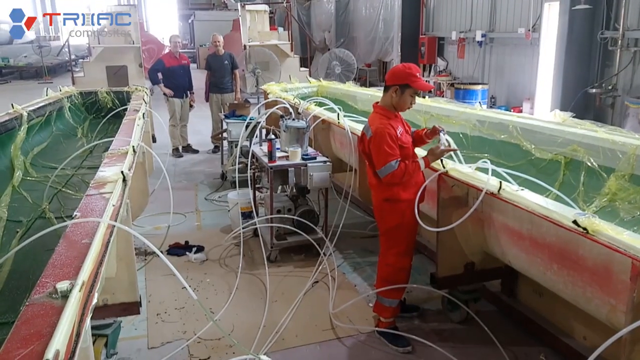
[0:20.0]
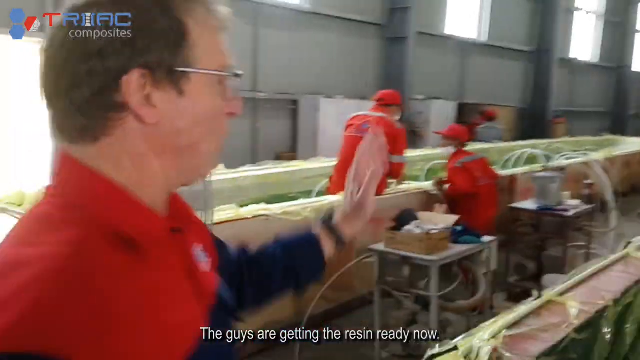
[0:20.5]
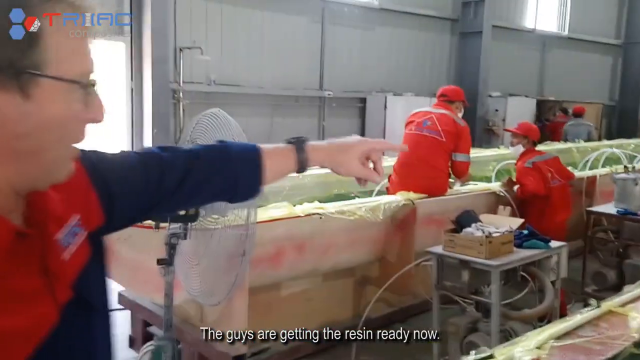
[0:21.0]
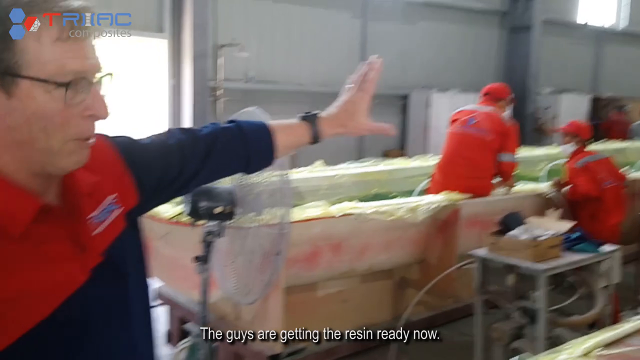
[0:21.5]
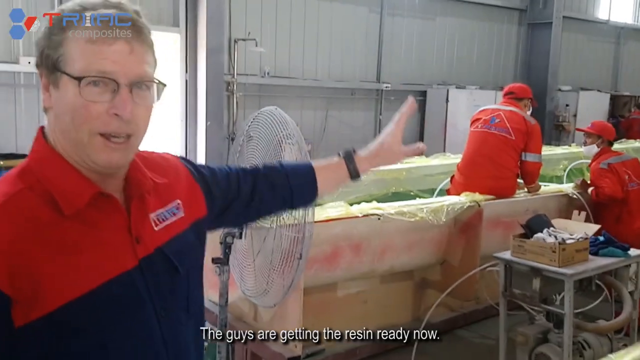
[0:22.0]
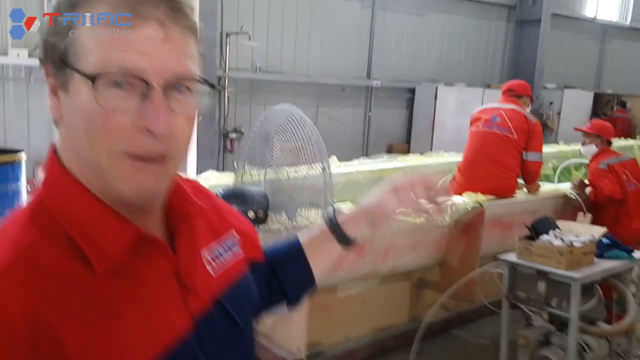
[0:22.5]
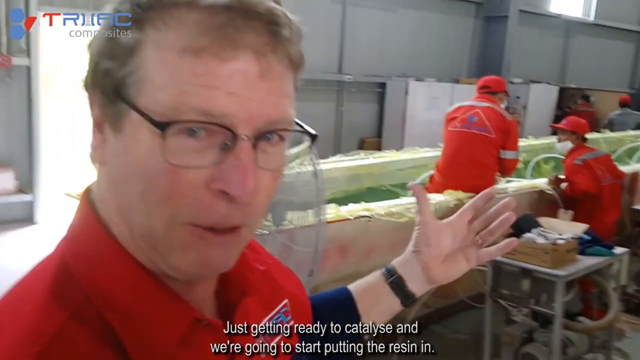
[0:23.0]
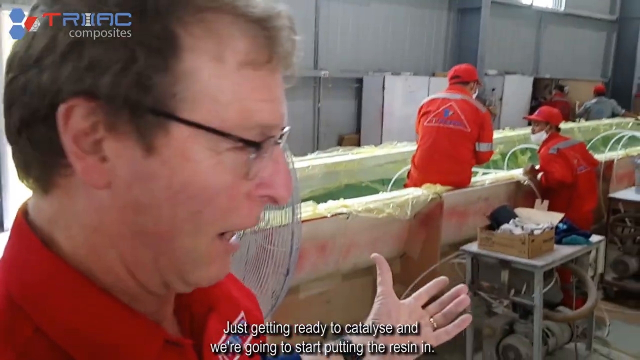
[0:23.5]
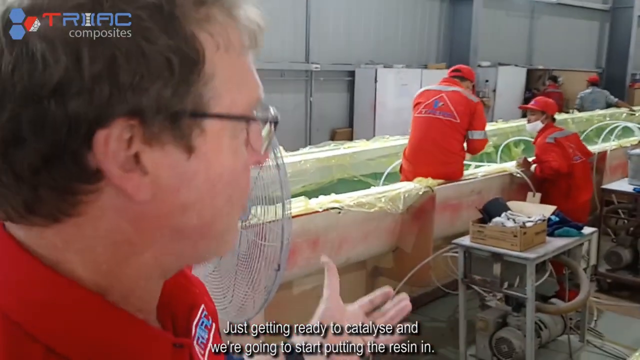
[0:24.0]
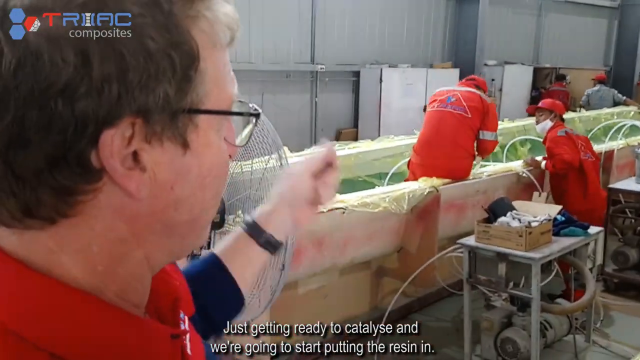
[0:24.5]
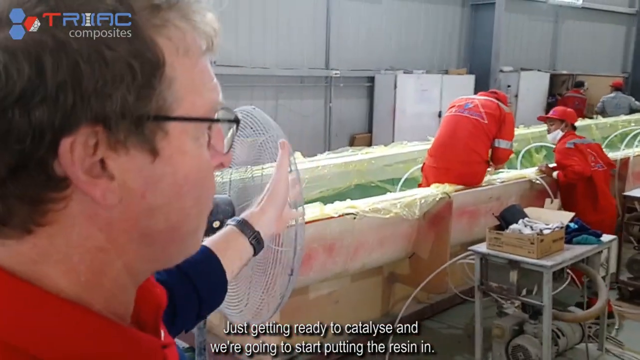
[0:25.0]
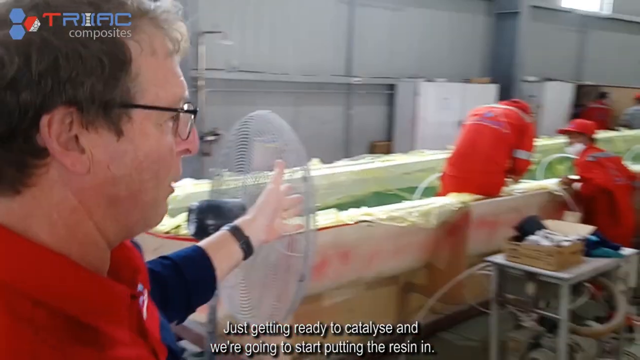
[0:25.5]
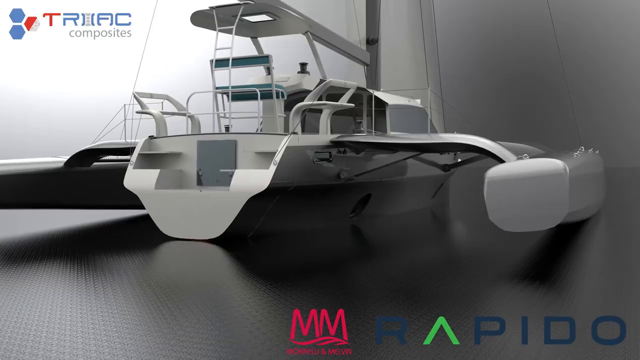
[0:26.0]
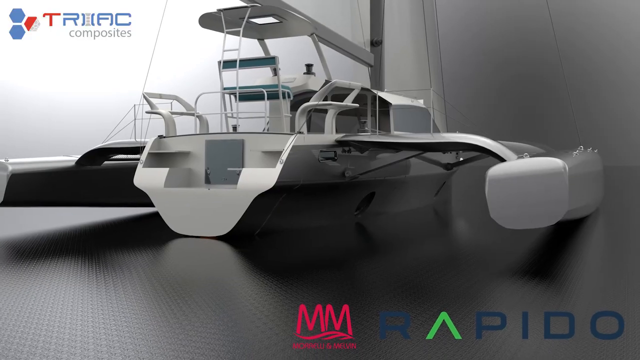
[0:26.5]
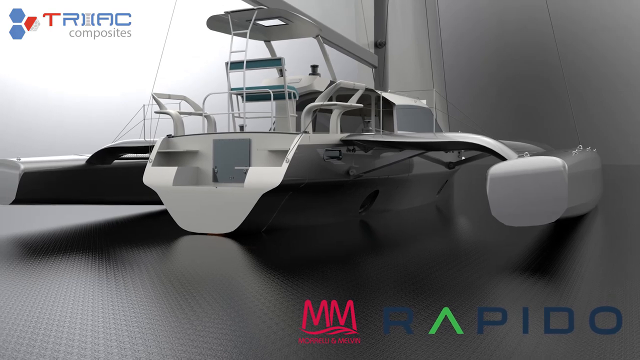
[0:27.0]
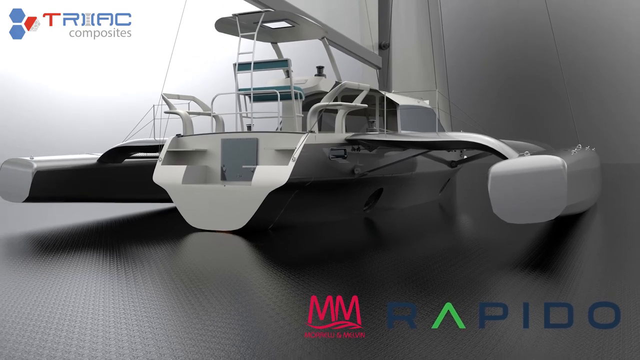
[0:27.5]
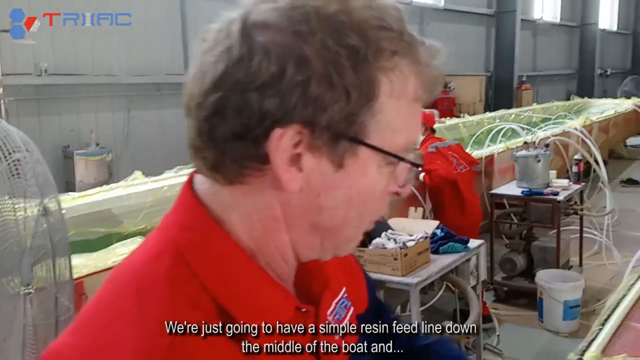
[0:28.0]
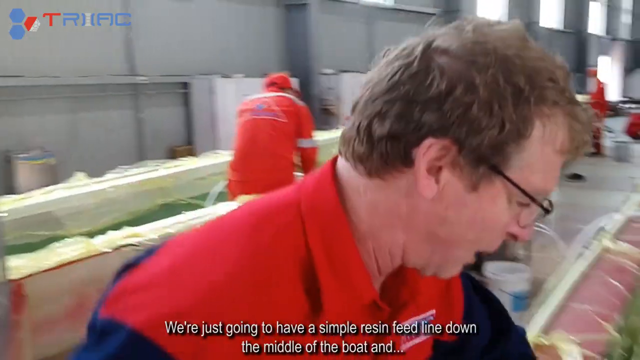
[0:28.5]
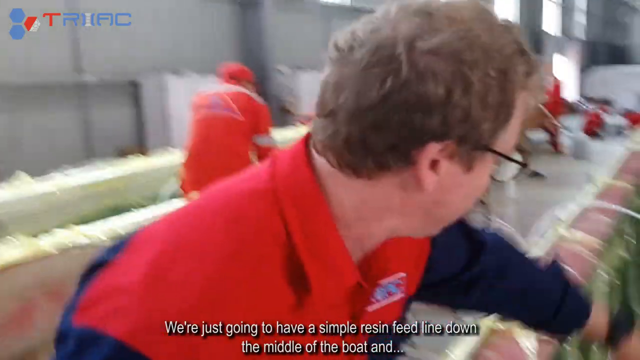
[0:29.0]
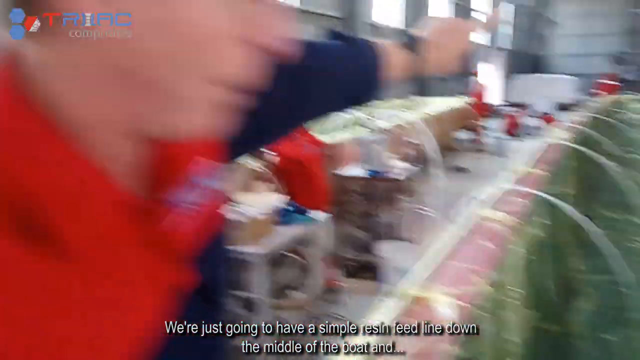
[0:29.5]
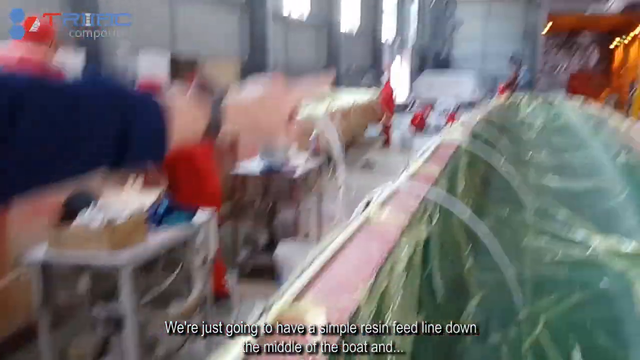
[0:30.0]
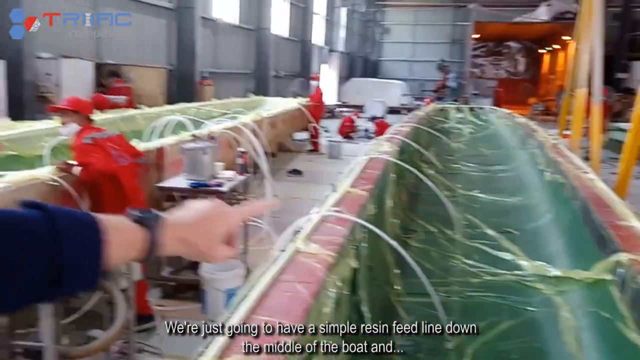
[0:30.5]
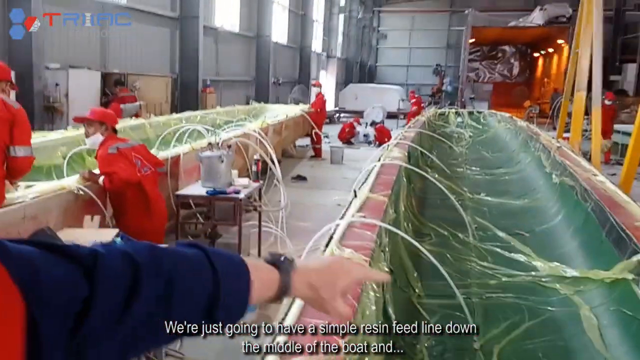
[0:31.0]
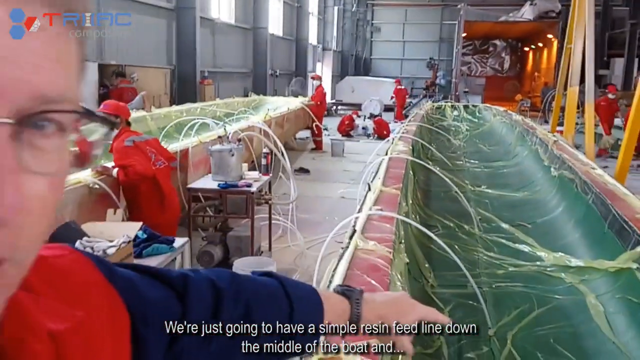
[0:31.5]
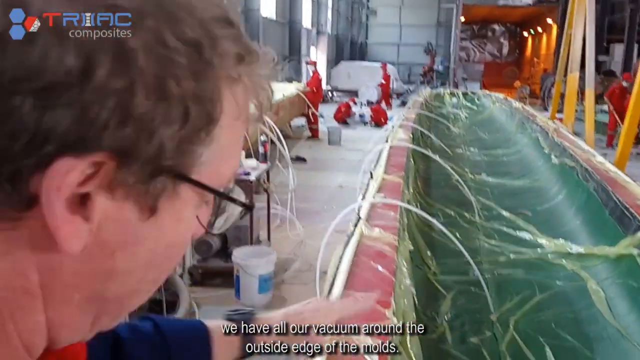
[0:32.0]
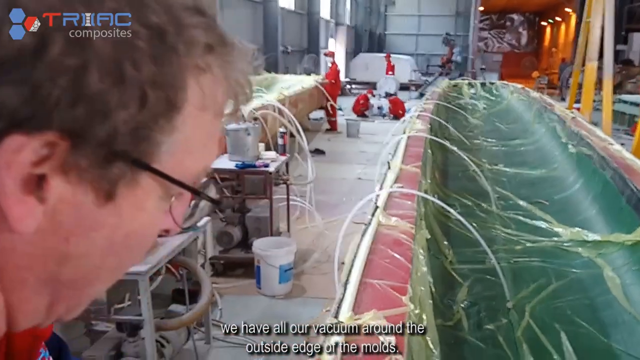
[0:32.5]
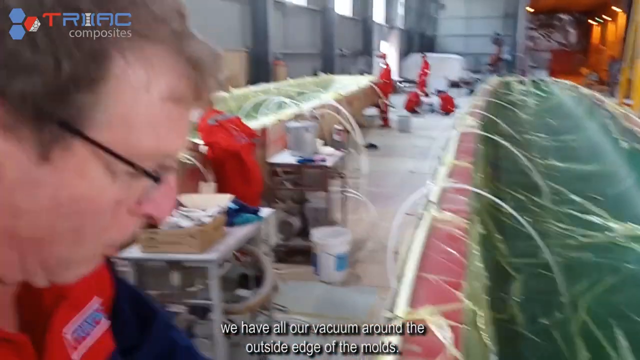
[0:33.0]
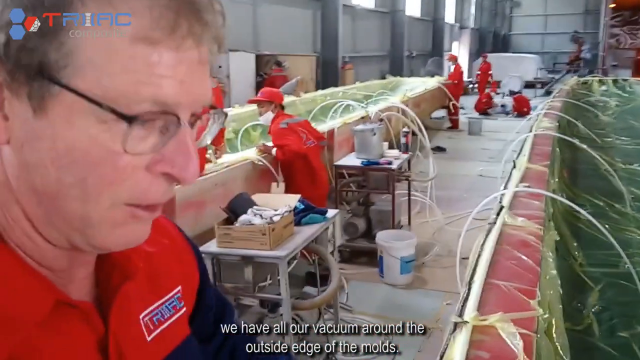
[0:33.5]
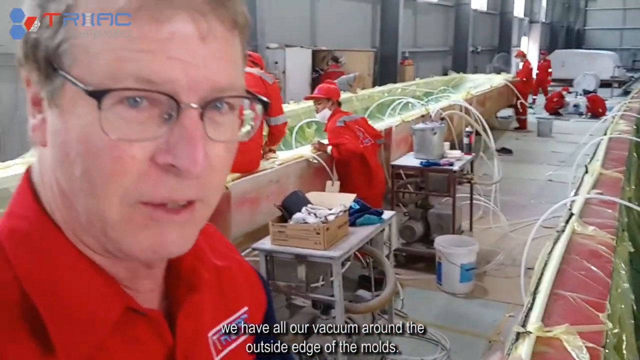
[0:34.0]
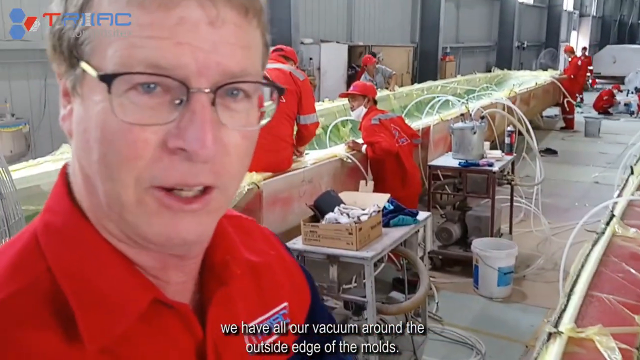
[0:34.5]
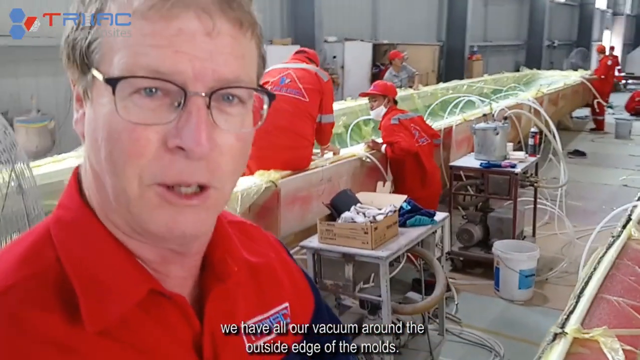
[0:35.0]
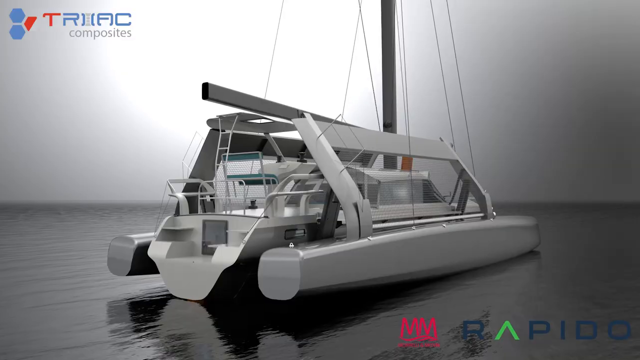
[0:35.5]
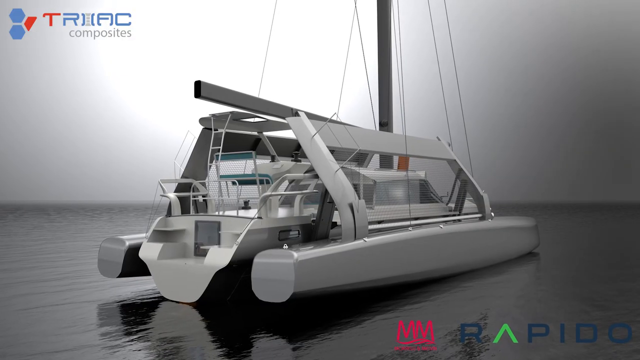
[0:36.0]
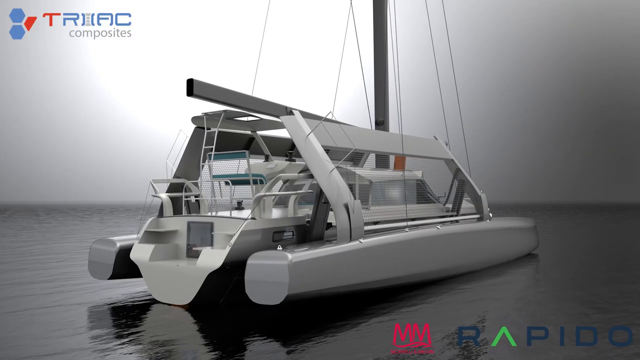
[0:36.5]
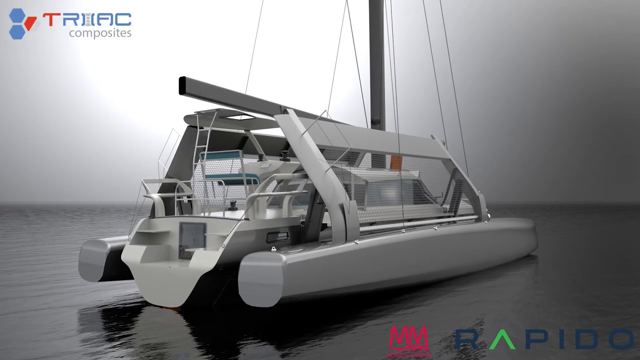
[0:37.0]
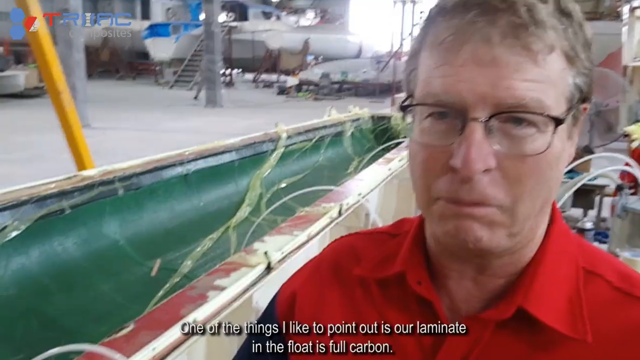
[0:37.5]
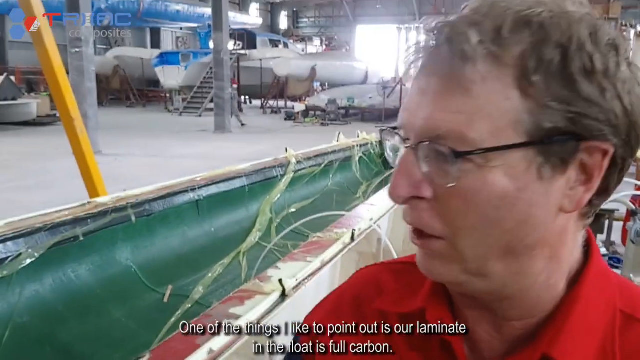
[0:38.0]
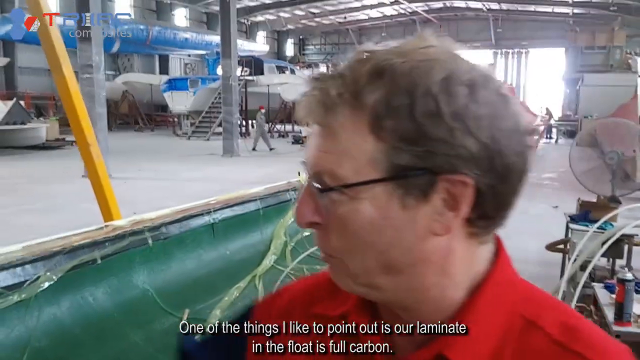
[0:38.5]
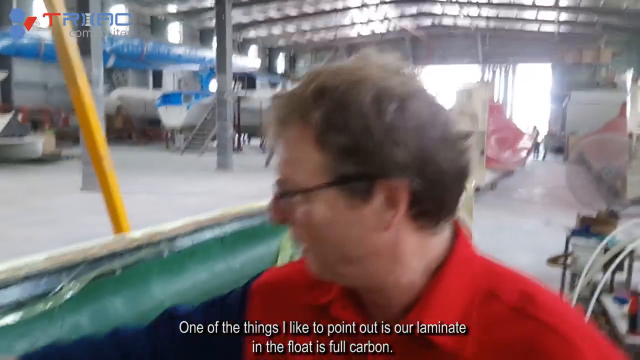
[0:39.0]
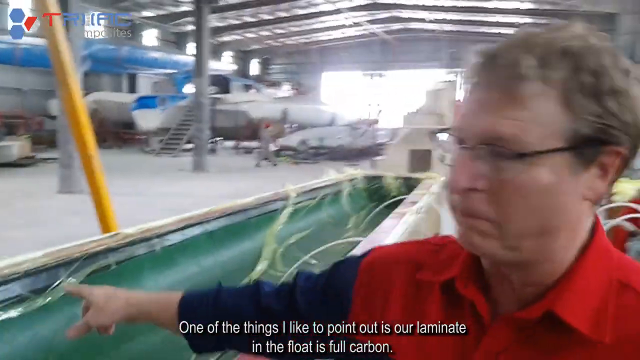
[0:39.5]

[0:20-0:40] Inside the factory, Mark Waller is seen talking and pointing out specifics of the float as he shows the viewer around. In the background, several factory workers in an assembly line are working on the floats, and behind them, at the back of the factory, a big Rapido is somehow being assembled as well. Many factory workers dressed in orange with orange caps walk around the factory assembling different pieces of equipment, and a lot of equipment is present. A couple of mostly grayed-out pictures of the Rapido, which are AI representations, are also shown.